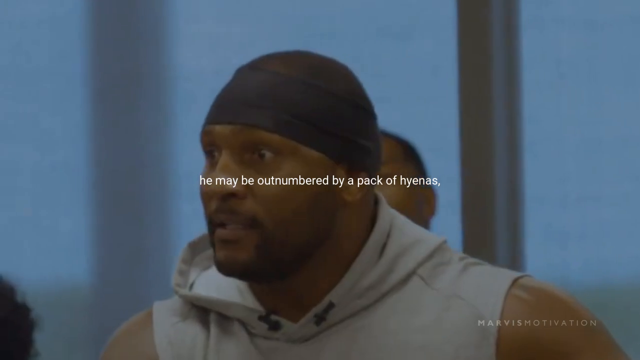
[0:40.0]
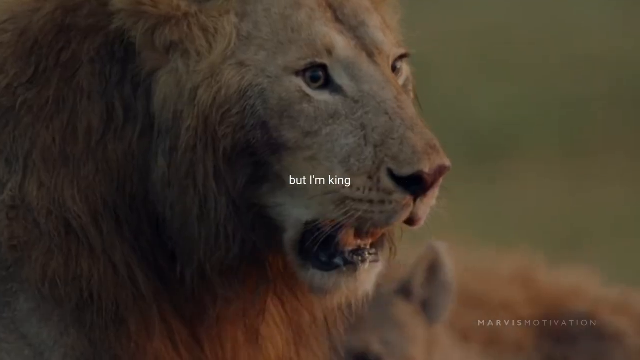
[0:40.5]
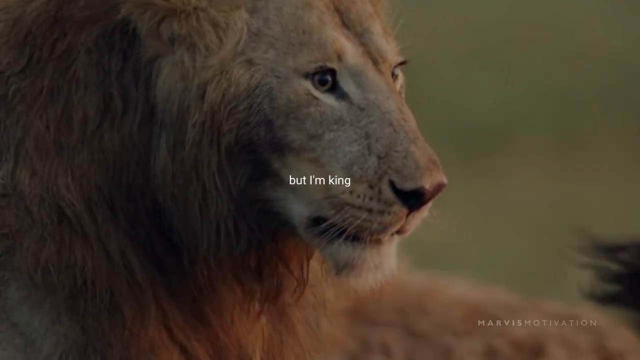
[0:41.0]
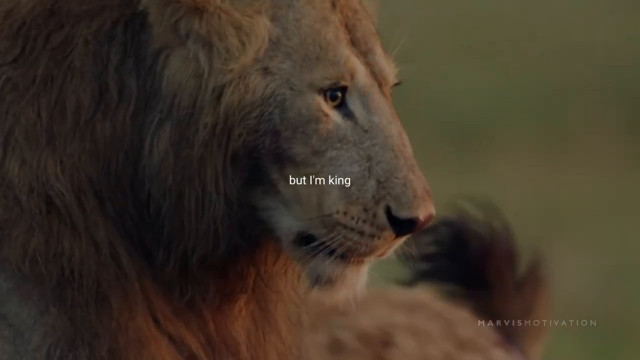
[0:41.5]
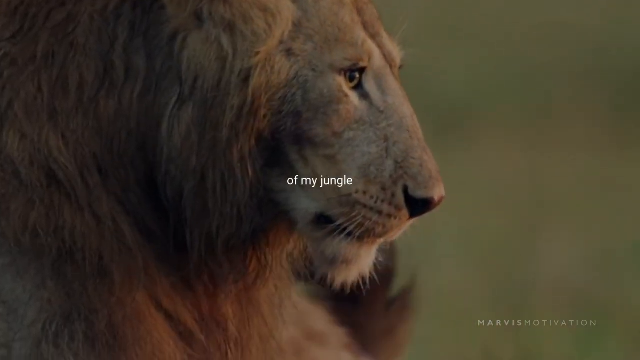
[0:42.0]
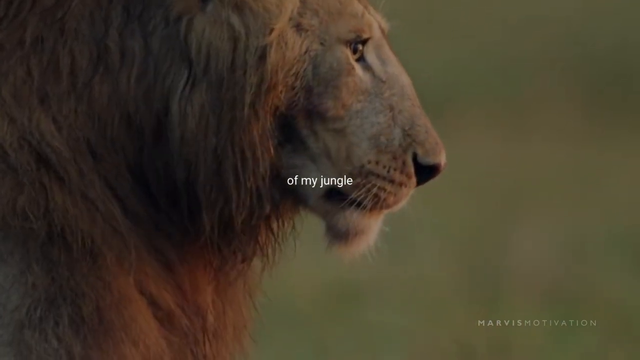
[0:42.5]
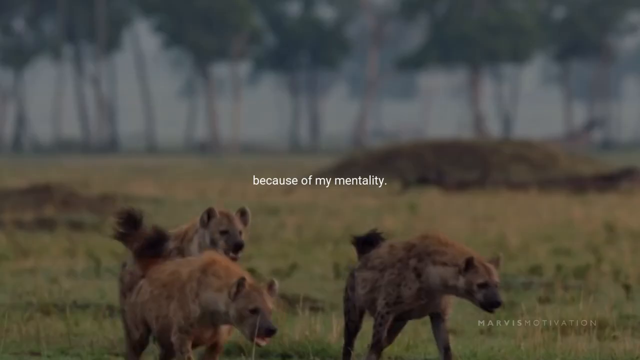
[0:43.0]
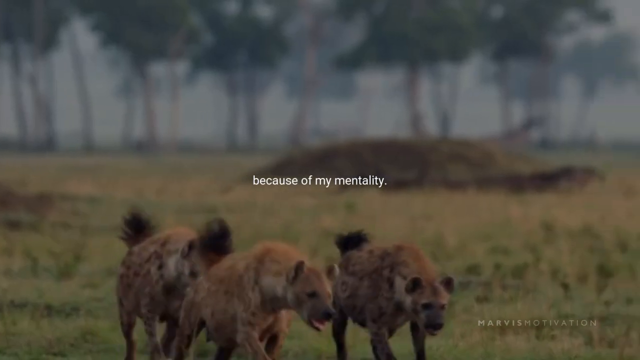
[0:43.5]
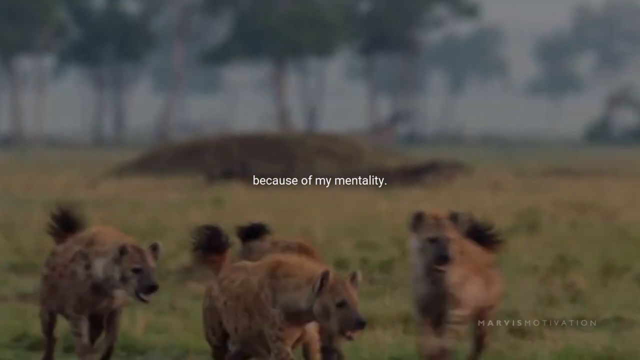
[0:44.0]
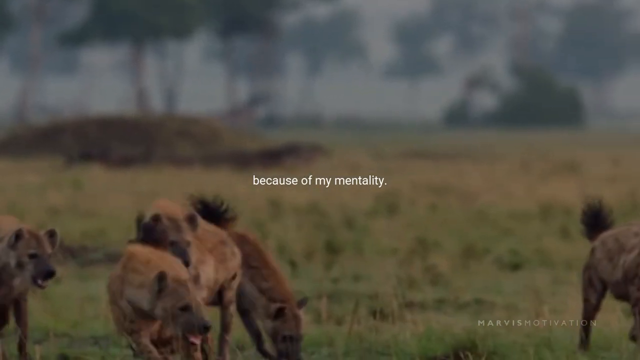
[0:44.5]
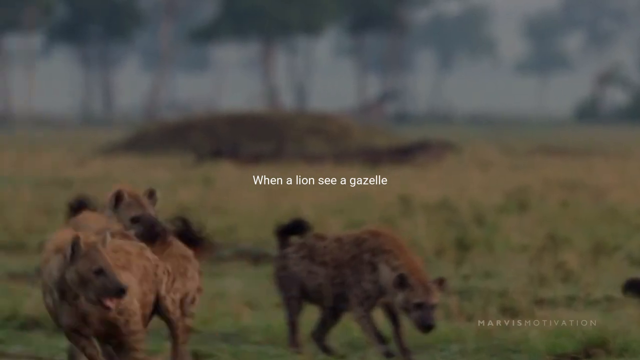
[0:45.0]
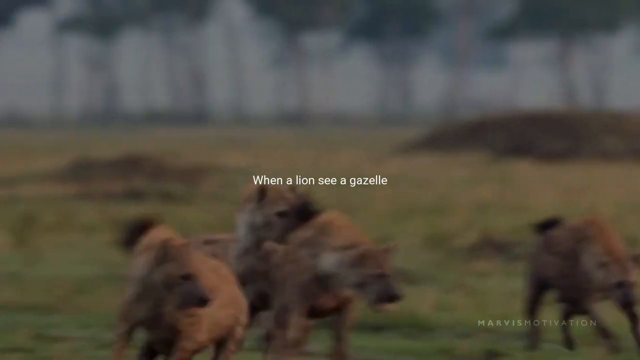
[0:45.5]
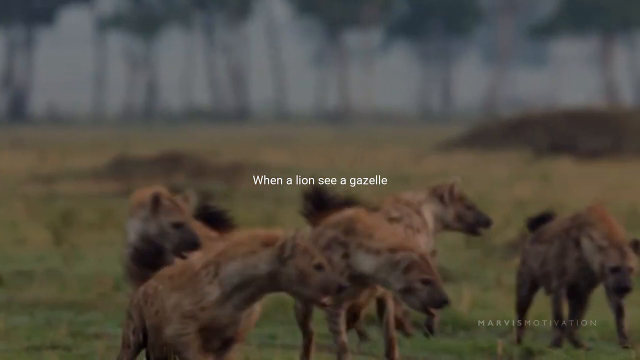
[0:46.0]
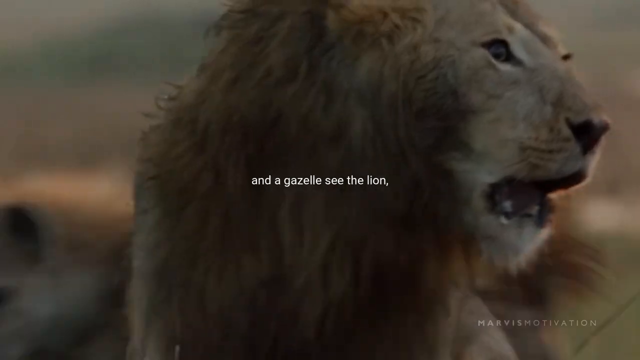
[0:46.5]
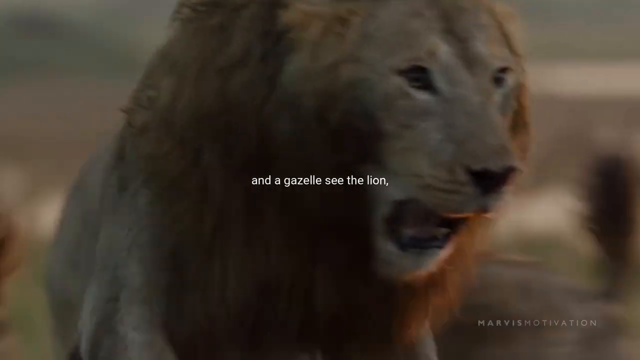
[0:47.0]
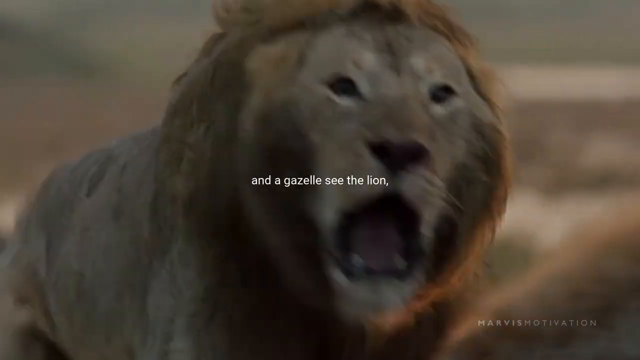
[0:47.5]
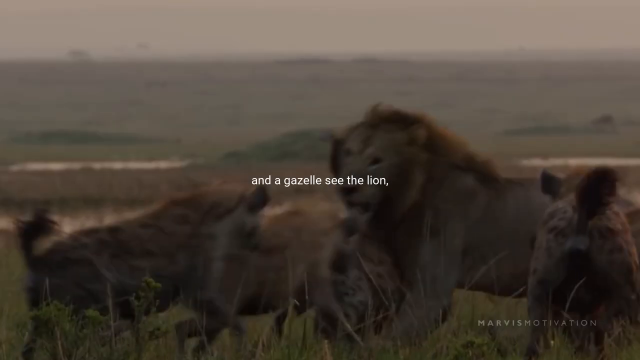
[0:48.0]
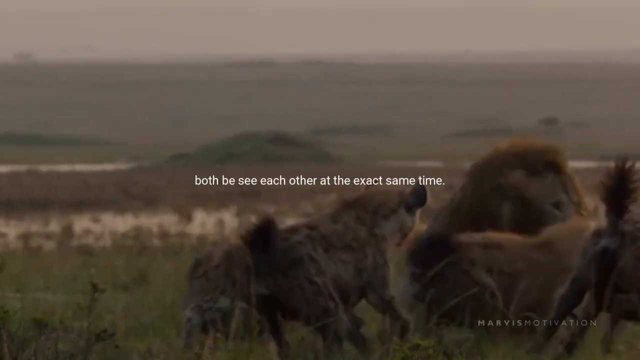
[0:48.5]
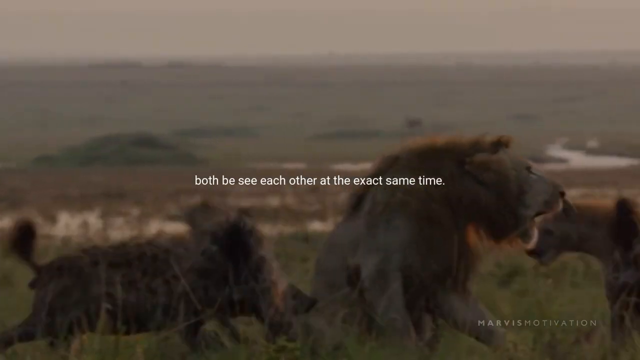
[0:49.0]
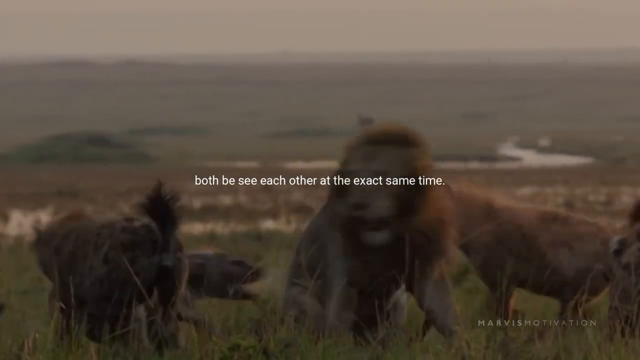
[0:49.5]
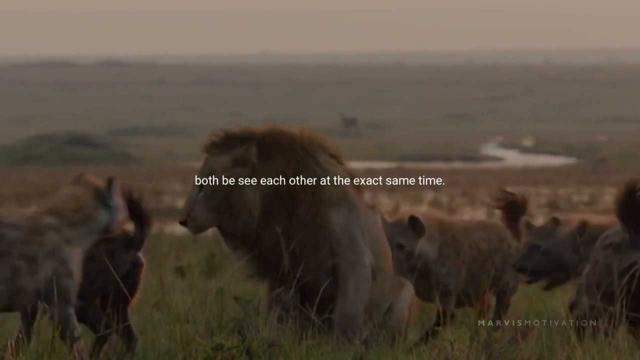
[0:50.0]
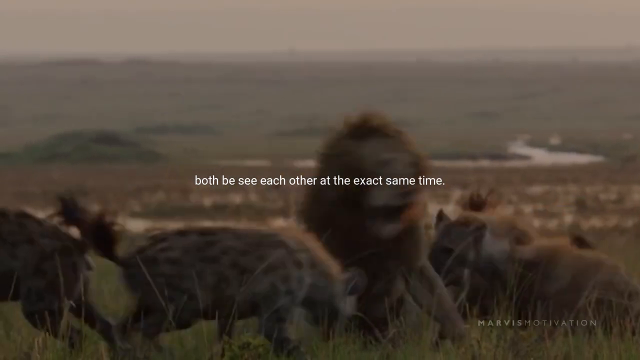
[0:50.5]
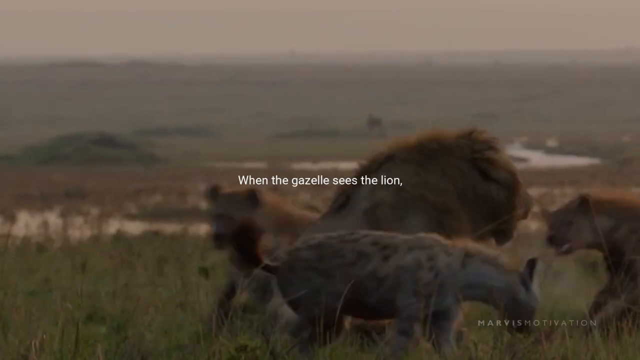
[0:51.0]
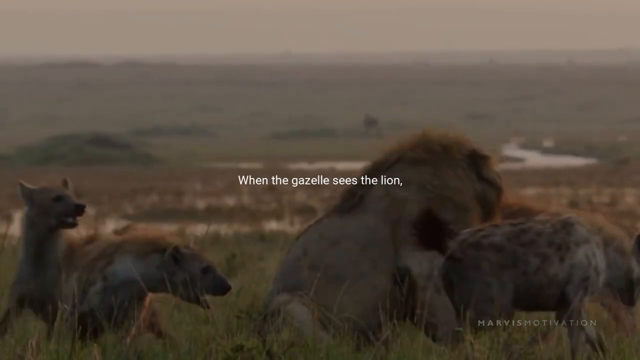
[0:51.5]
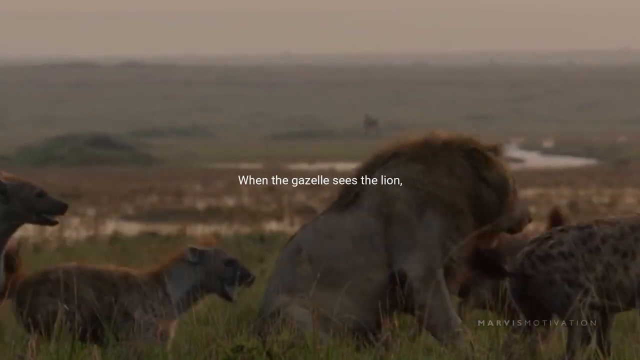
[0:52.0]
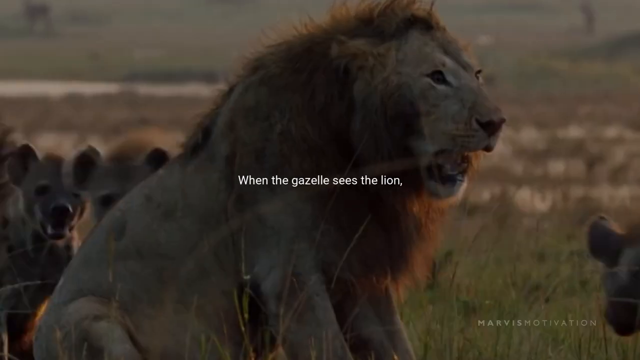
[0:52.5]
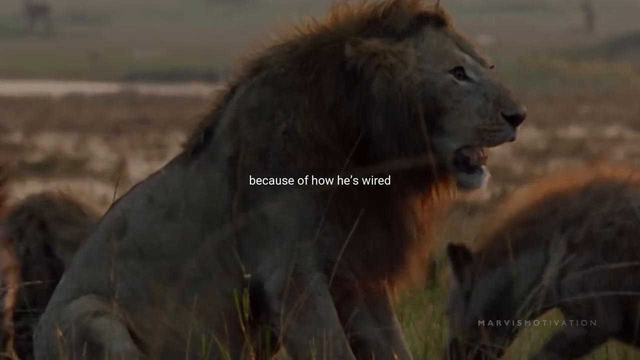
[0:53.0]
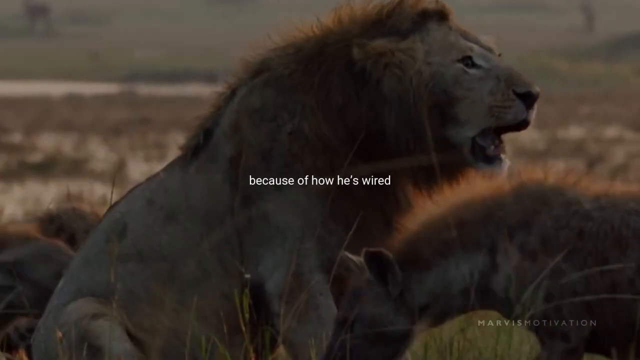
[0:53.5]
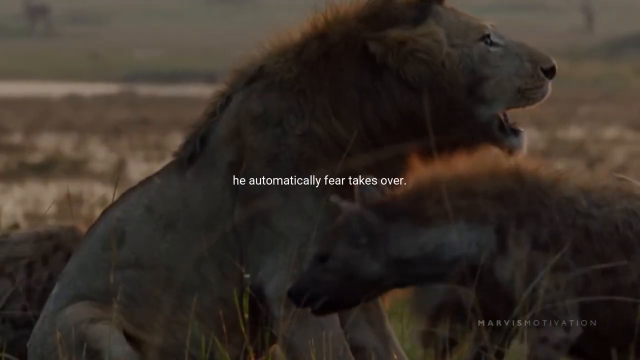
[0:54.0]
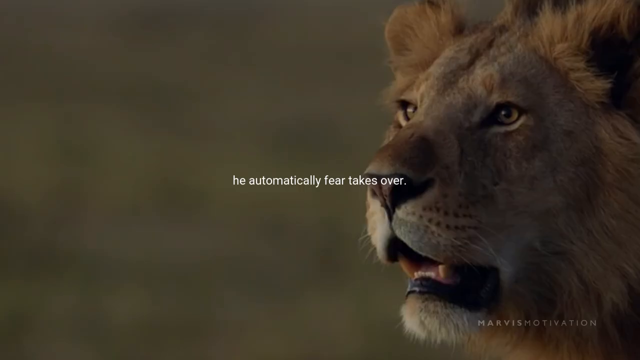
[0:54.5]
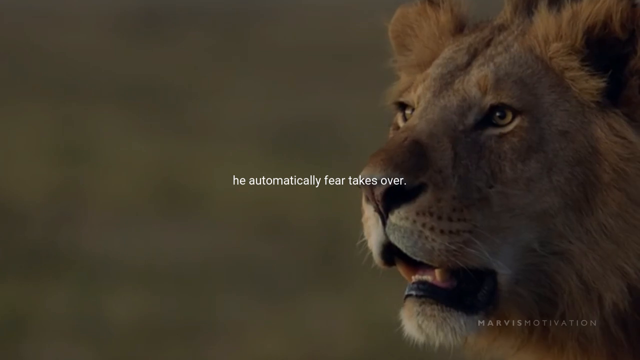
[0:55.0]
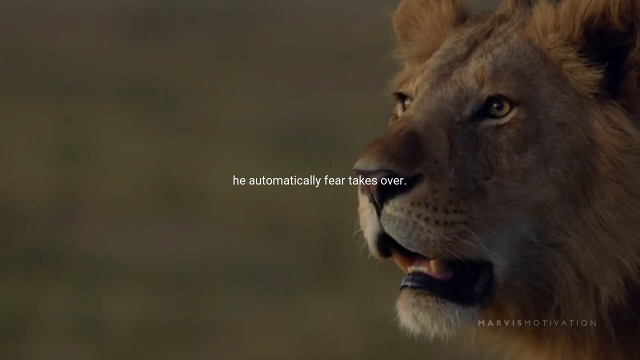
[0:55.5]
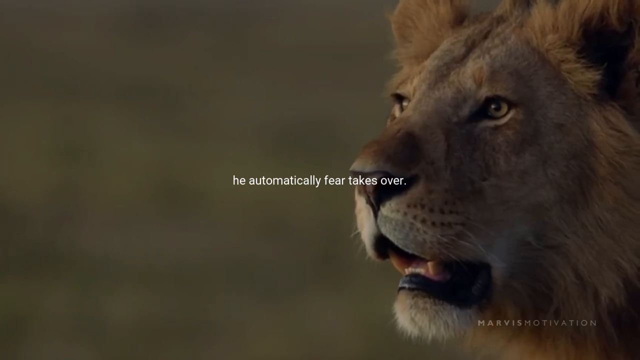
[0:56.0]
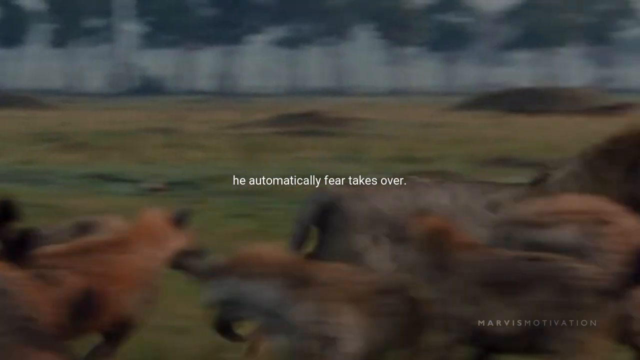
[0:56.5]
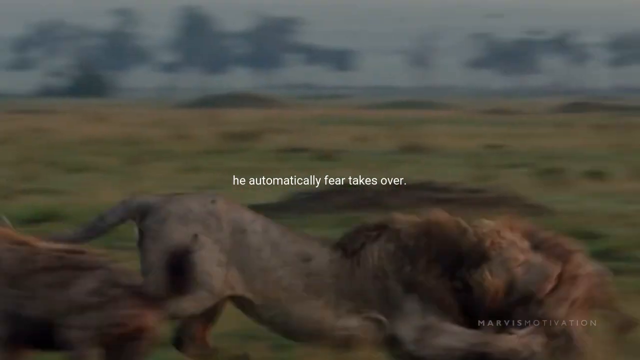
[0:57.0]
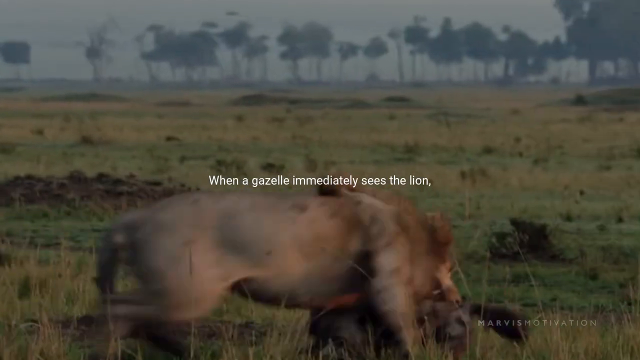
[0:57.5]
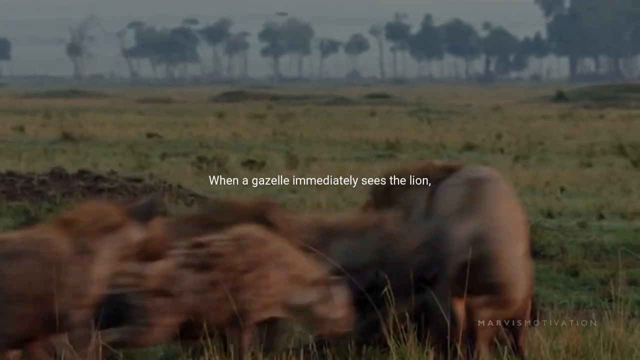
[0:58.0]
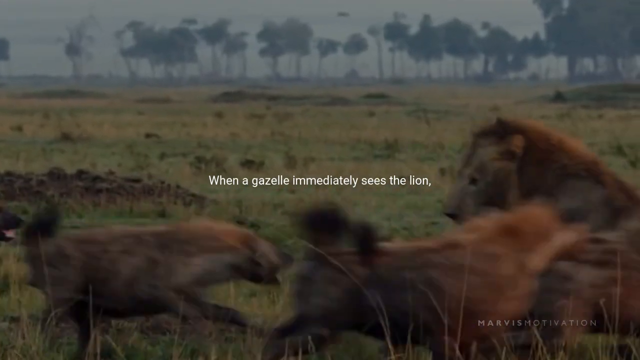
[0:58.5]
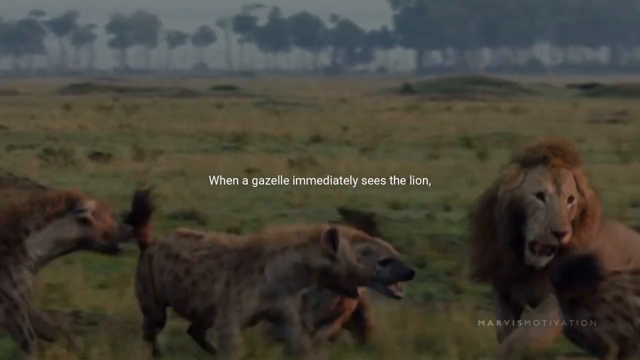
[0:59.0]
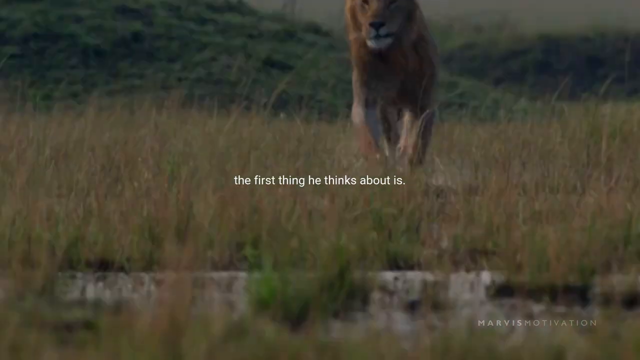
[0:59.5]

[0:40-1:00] A black individual in a cap appears with white text, and the video transitions between a few different screens, including one showing an elephant in a sort of jungle. It returns to the black individual in the black cap in a sort of gym environment, with text reading "because when a male lion walks up" as two black individuals are shown, followed by "you may be outnumbered by a pack of hyenas. But I'm a king of my jungle, because of my mentality" and "when a lion sees a gazelle, and the gazelle sees the lion." Many different screens then show a lion killing and seeking prey and a lion in its natural habitat, with text on the screen between them.